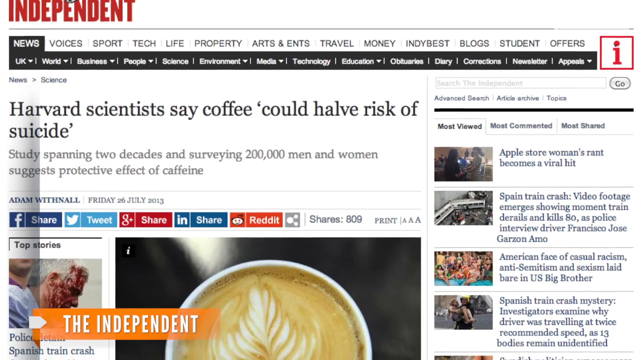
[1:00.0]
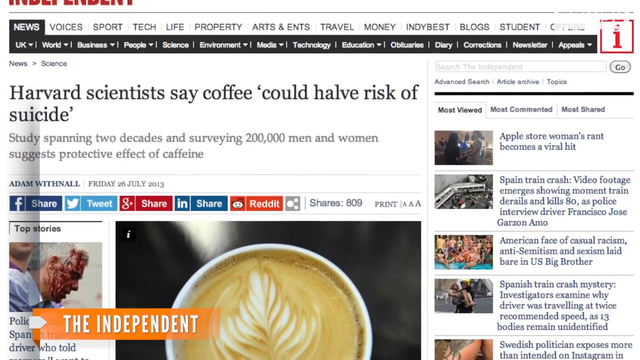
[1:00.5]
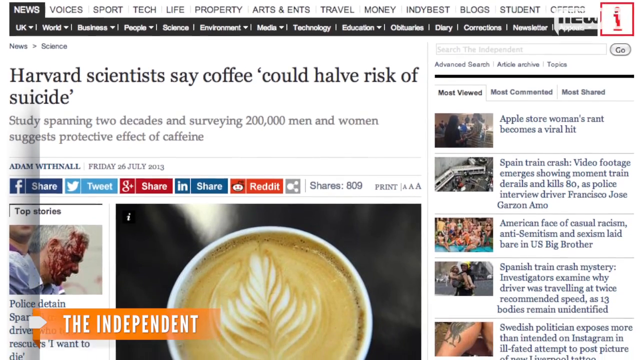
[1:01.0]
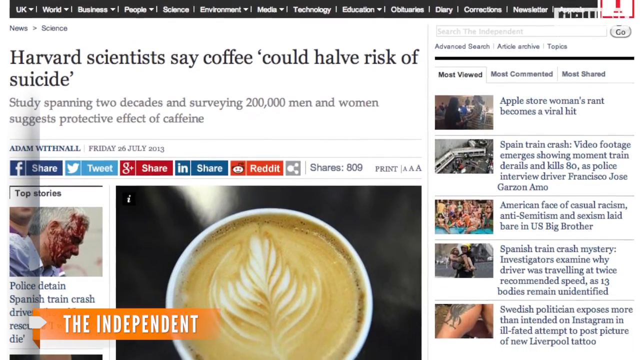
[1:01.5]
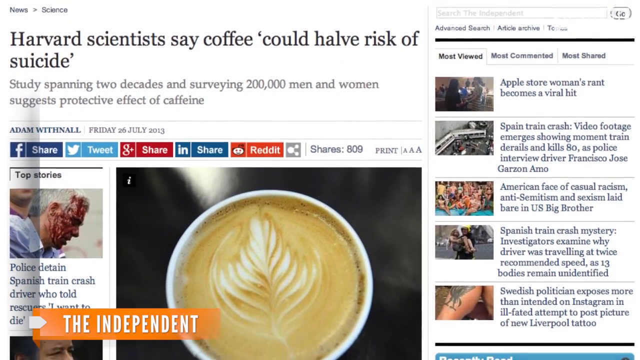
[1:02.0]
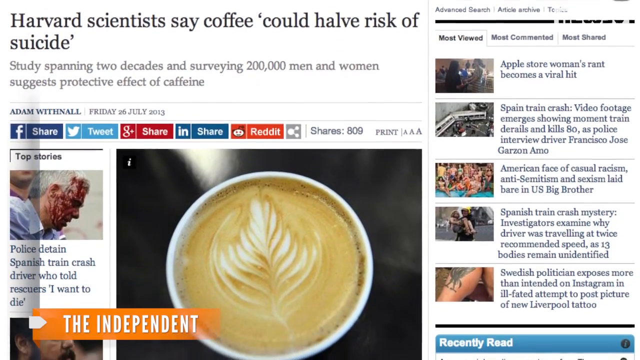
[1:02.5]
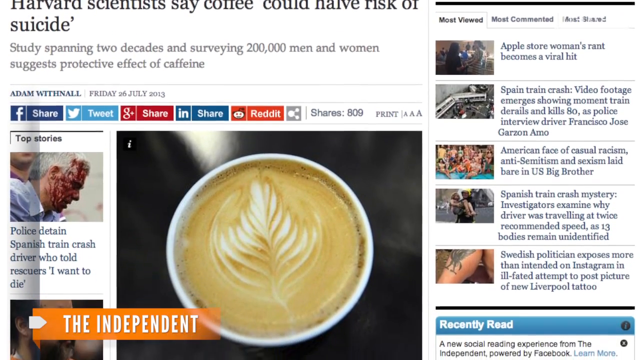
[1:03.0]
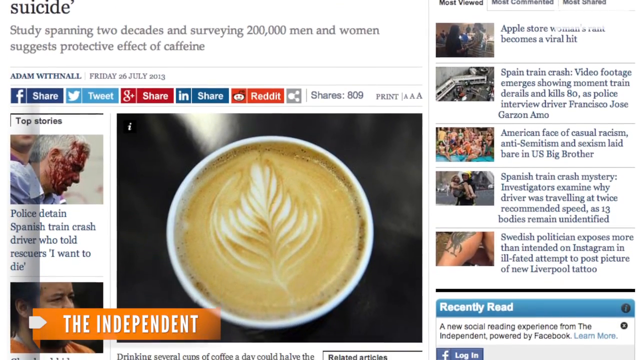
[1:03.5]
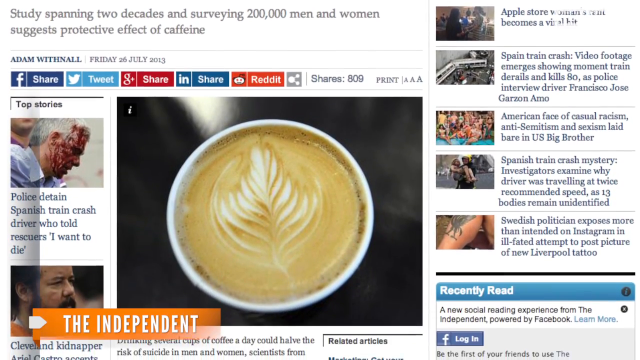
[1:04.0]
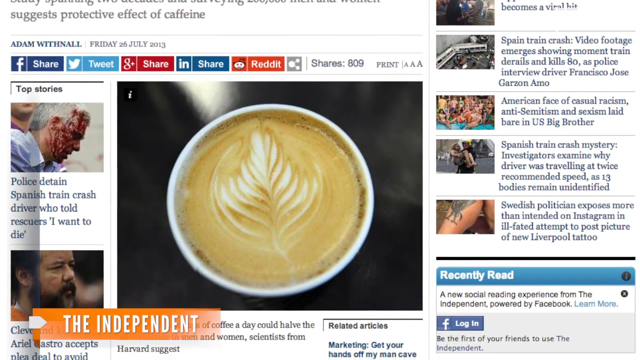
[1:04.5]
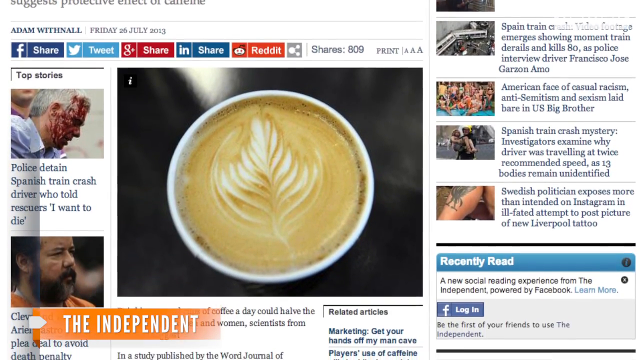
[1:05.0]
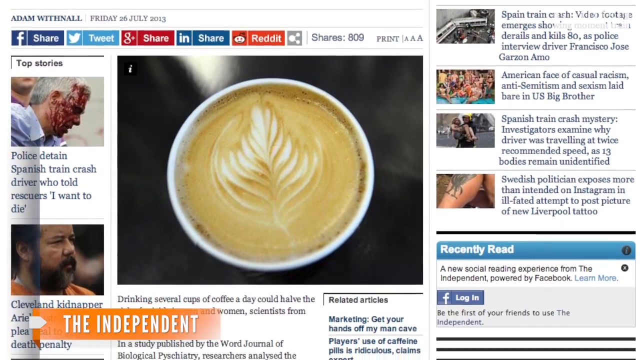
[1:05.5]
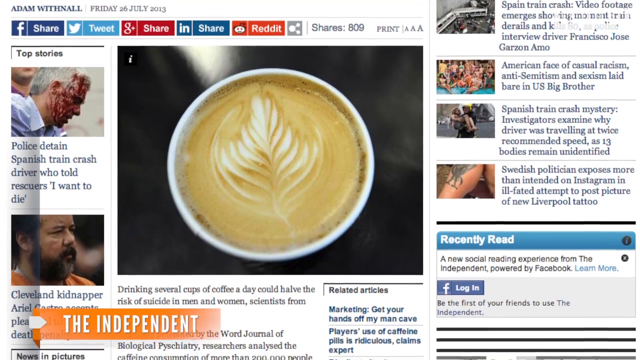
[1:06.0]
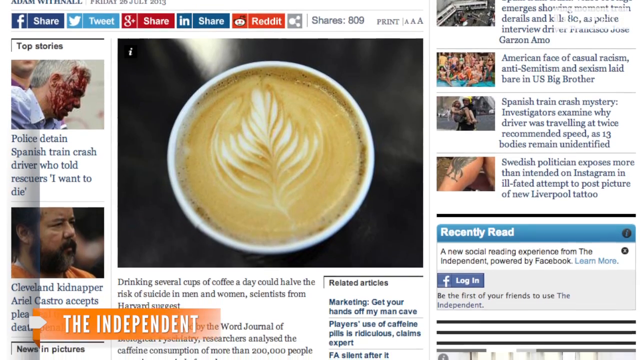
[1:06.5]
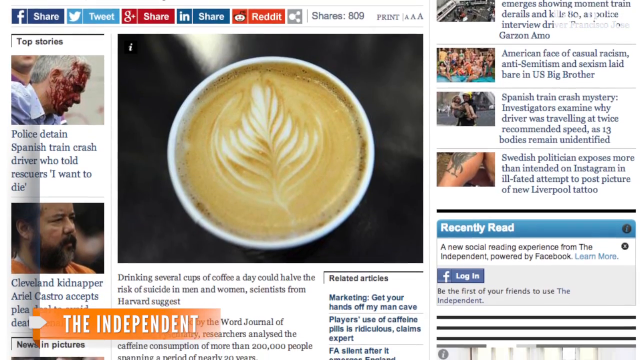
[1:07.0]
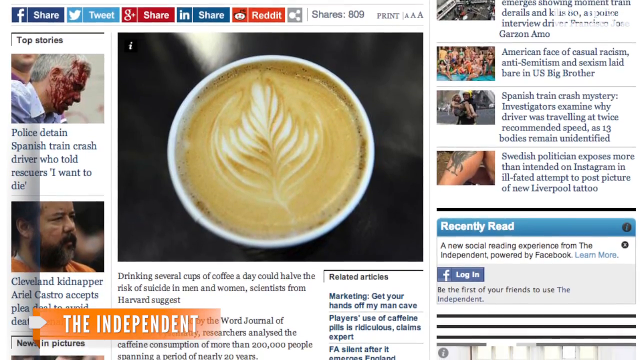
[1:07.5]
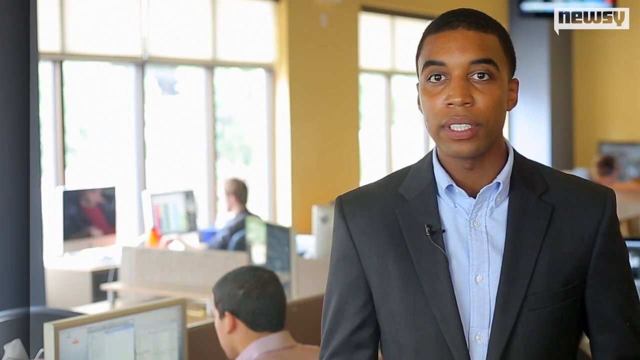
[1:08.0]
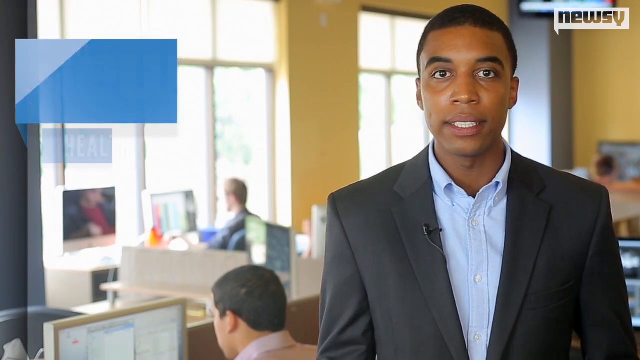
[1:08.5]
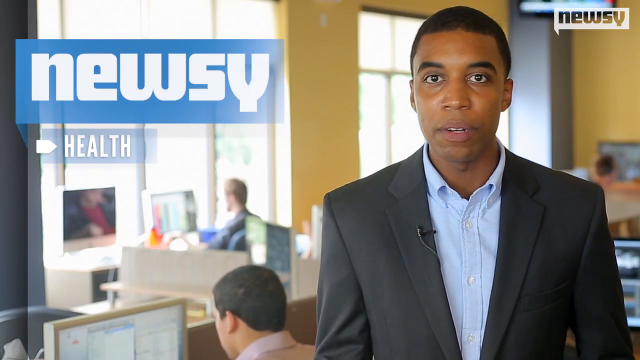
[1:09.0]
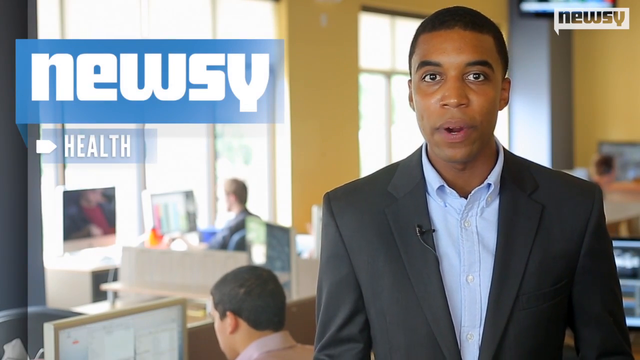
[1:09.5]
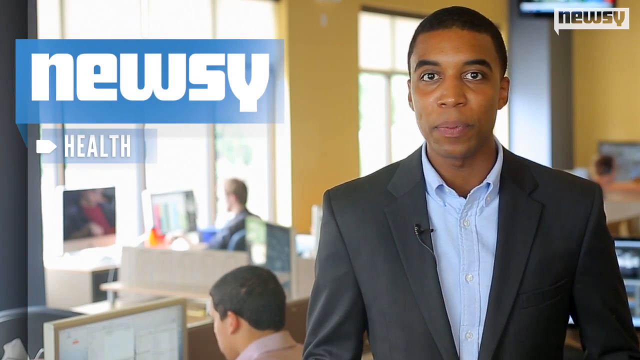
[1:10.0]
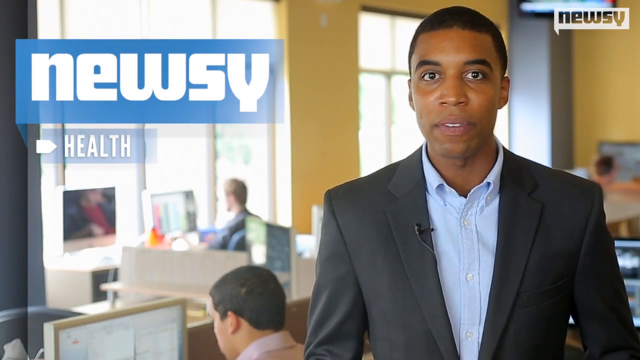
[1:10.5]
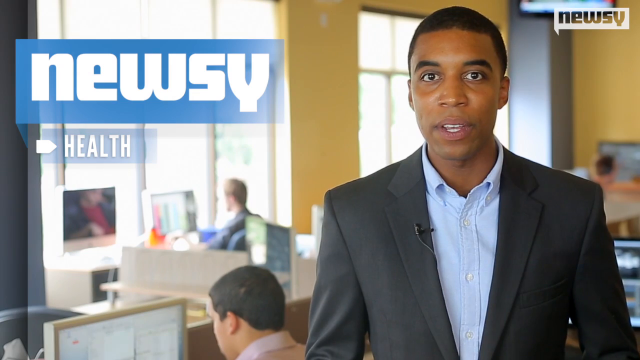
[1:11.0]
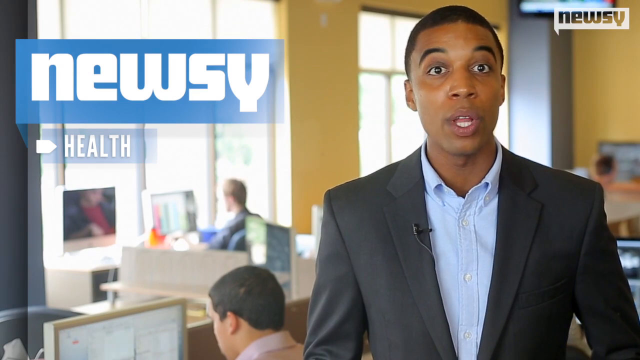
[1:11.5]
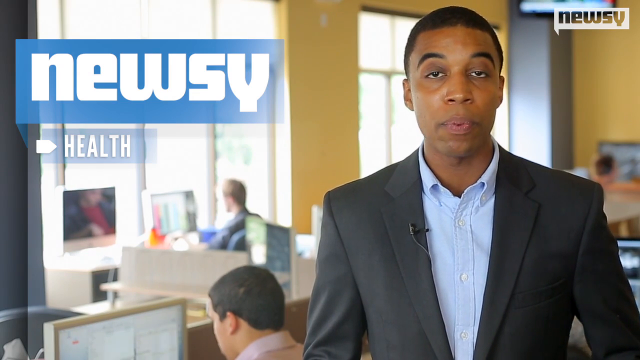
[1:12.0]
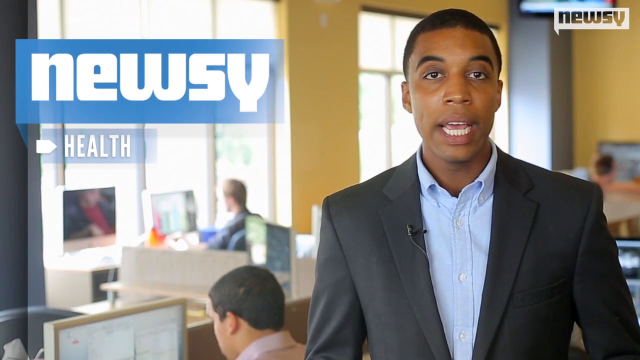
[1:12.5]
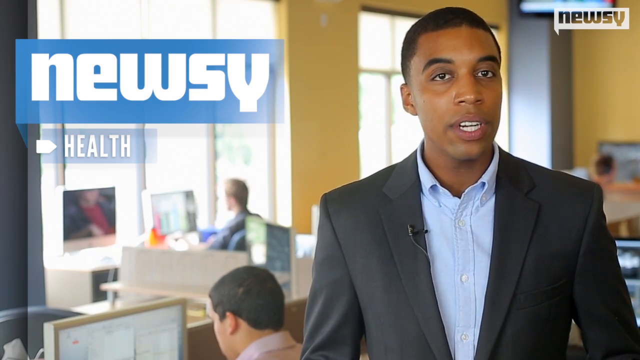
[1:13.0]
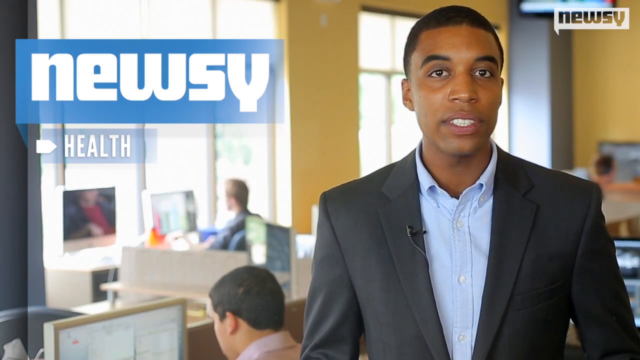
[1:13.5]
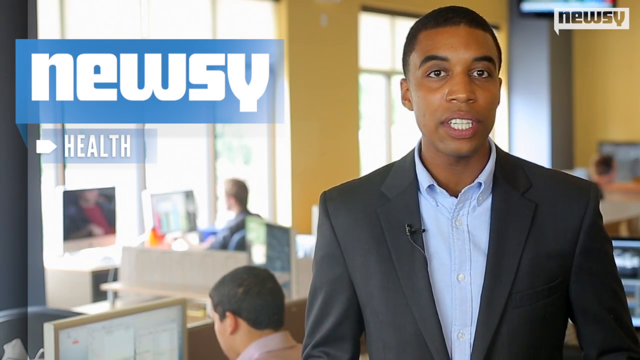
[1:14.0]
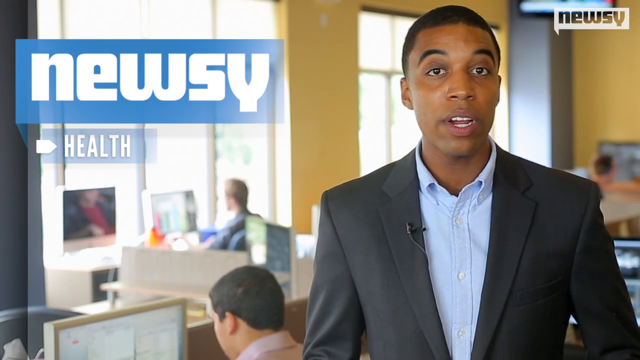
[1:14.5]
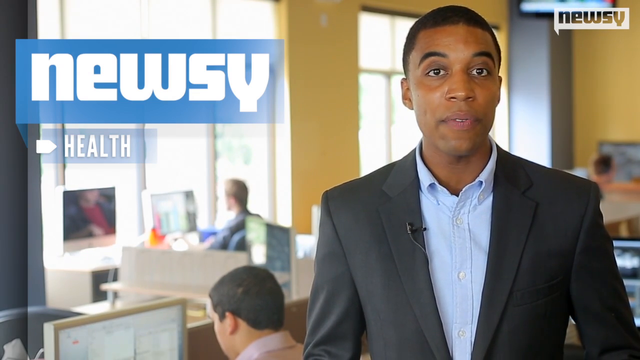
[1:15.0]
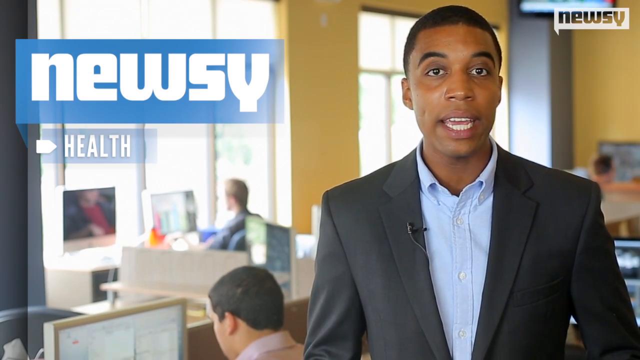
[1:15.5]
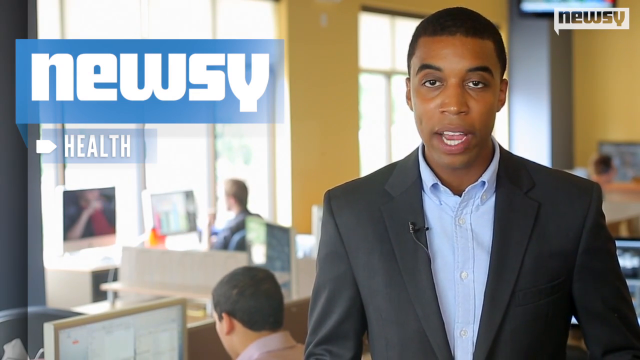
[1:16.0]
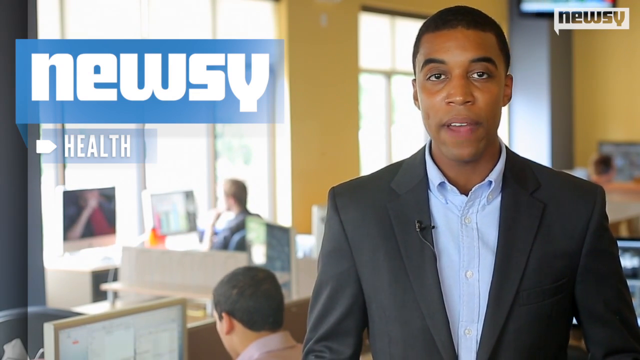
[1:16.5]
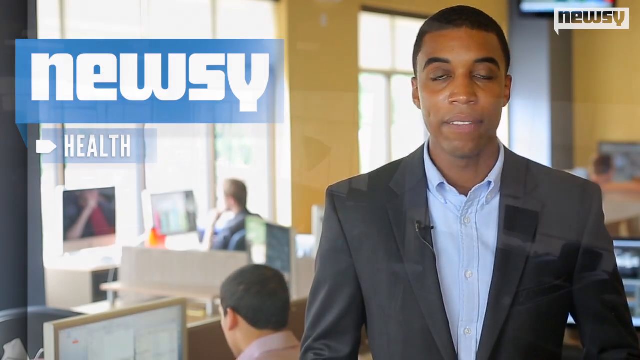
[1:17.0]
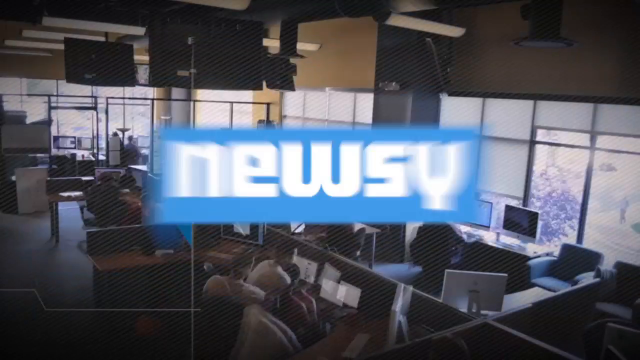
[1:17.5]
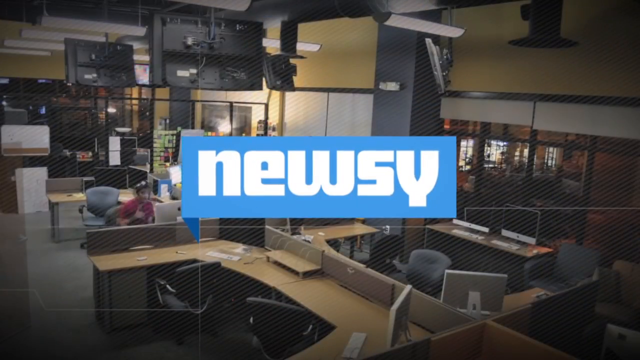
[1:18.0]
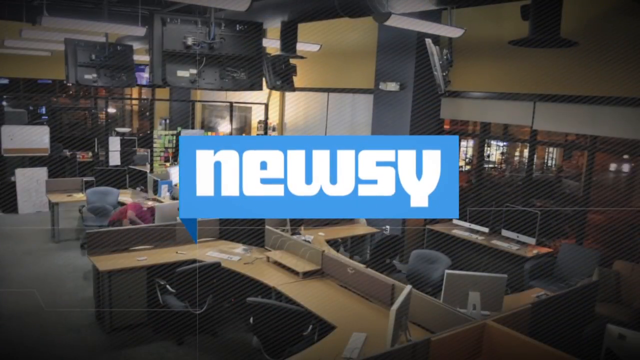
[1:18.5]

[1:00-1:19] An article on the screen reads "Harvard scientists say coffee could halve risk of suicide" and "study spanning two decades and surveying 200,000 men and women suggest protective effect of caffeine." At the bottom is an orange rectangle reading "the Independent" in all capital white letters, with a white arrow pointing at them. The African American anchor is then shown talking from the newsroom, and the shot cuts to the whole newsroom with "Newsy" in the background. Behind the anchor, the newsroom has yellow walls and lots of windows, and a few other anchors are sitting at their desks typing on computers. Right at the end, the anchor kind of disappears and a view of the whole yellow room appears, which has gotten somewhat darker, as if the news program is over.